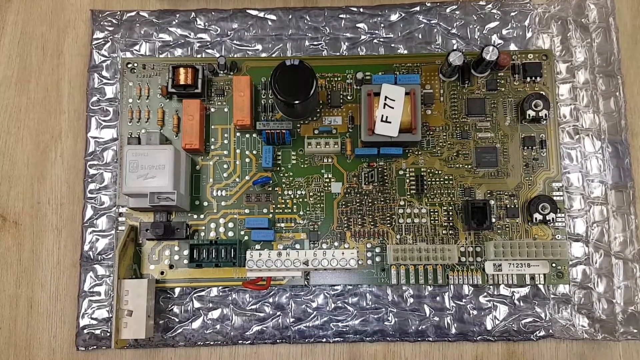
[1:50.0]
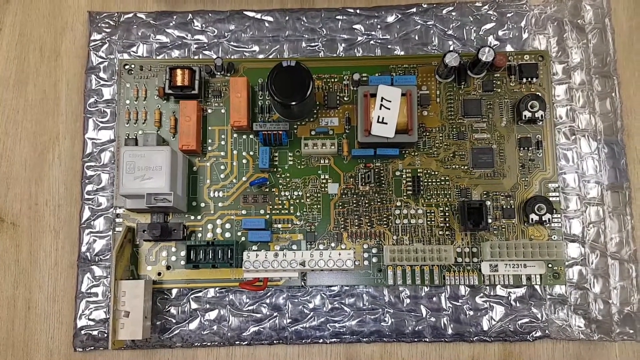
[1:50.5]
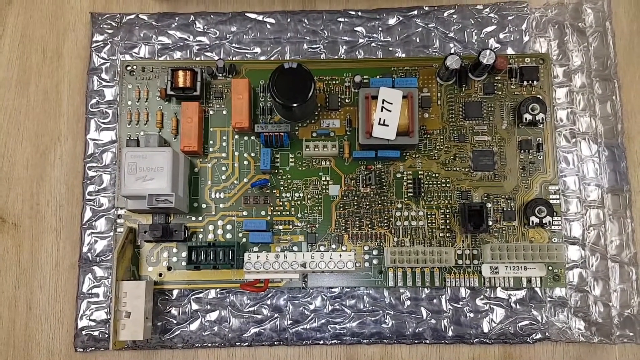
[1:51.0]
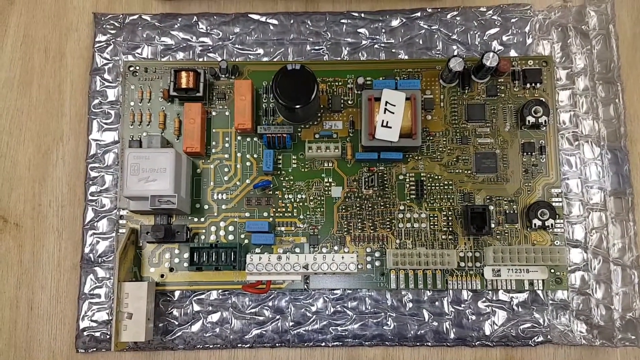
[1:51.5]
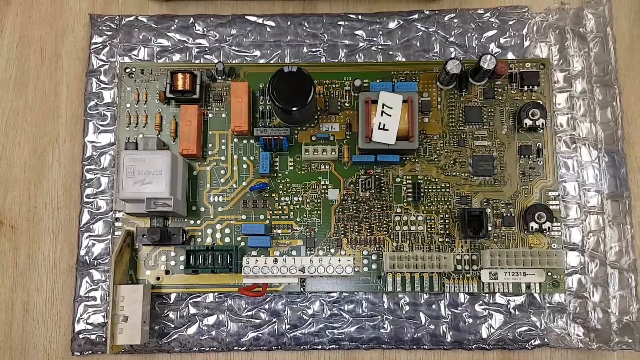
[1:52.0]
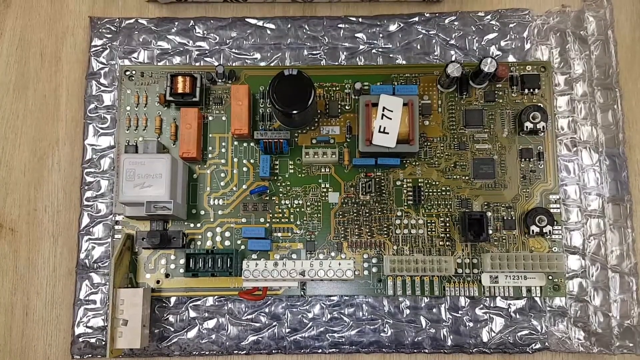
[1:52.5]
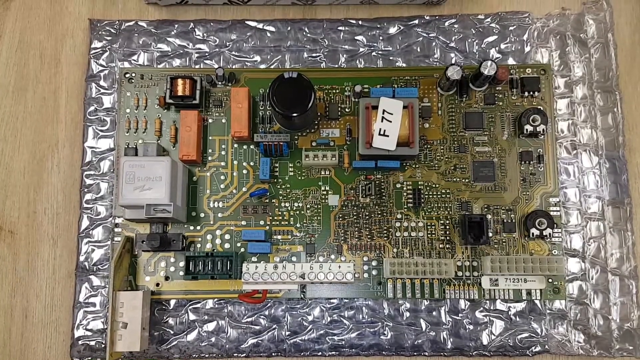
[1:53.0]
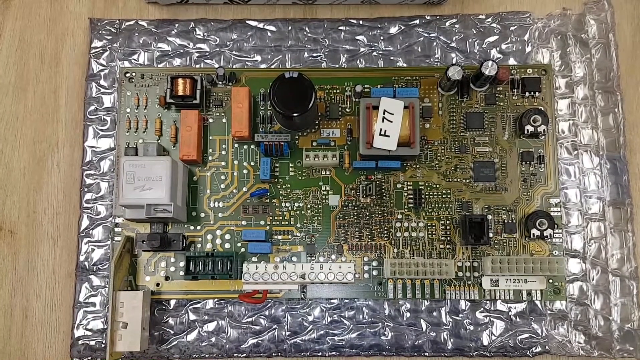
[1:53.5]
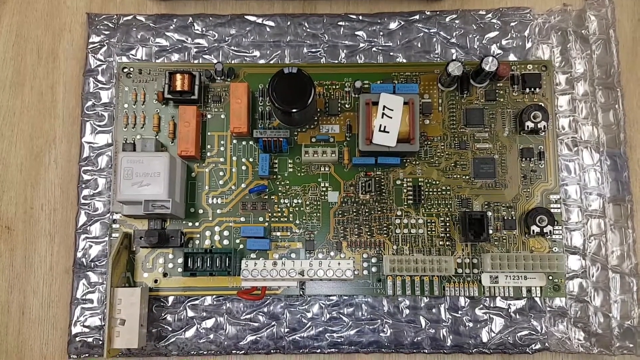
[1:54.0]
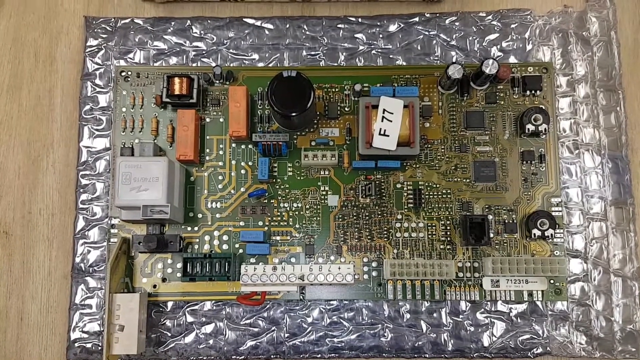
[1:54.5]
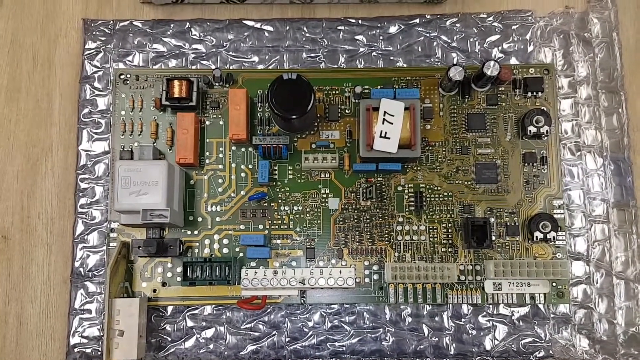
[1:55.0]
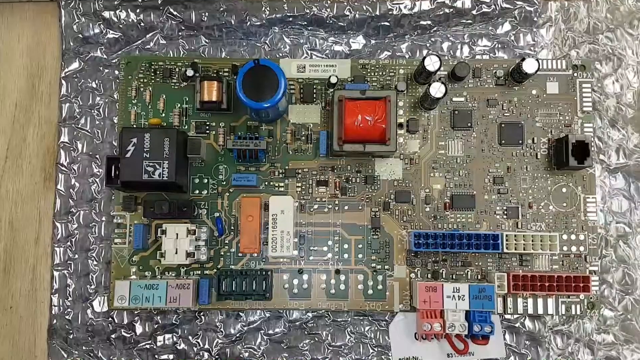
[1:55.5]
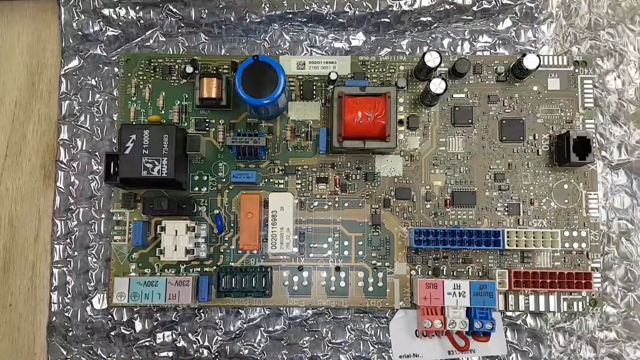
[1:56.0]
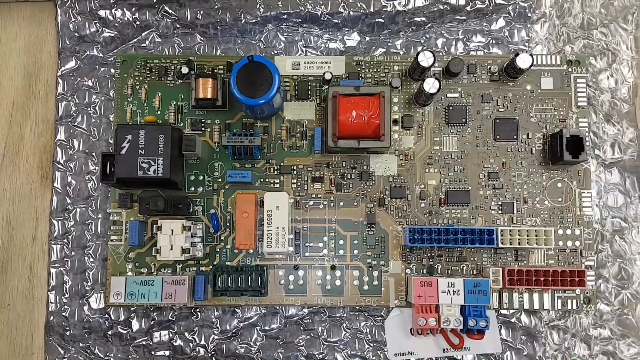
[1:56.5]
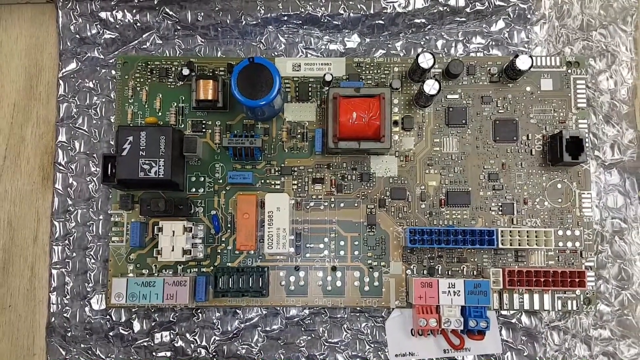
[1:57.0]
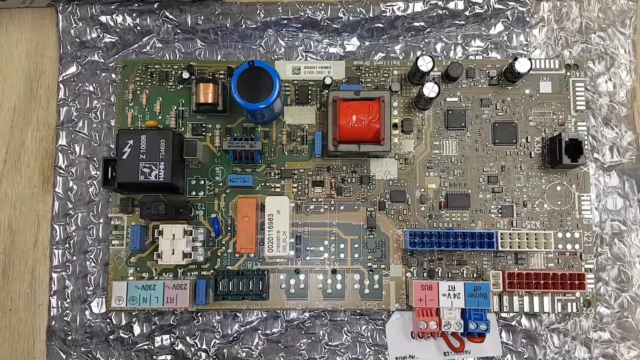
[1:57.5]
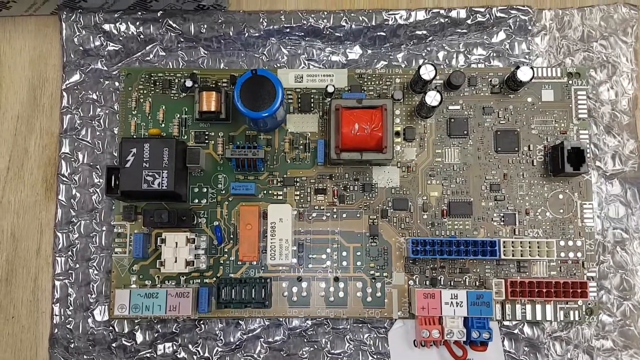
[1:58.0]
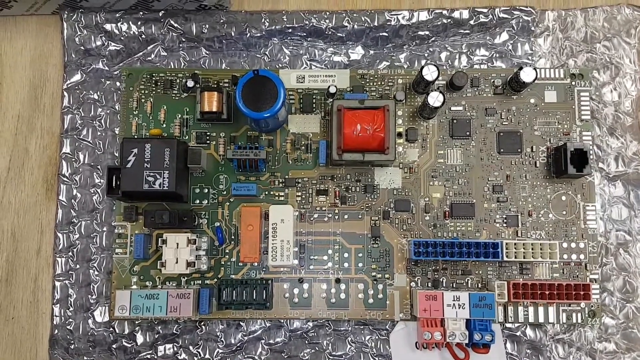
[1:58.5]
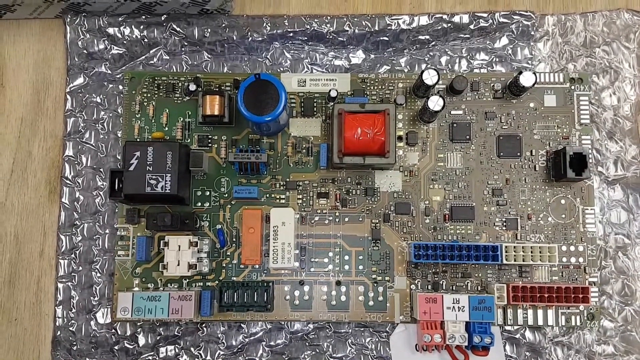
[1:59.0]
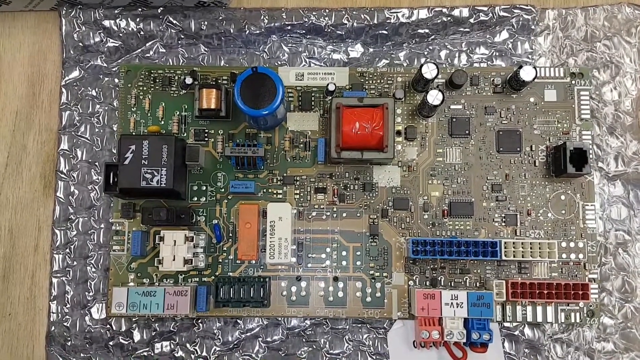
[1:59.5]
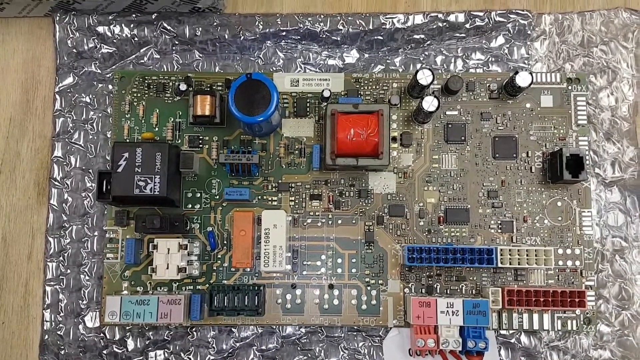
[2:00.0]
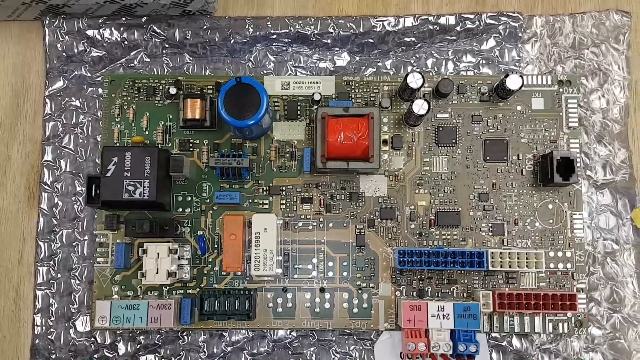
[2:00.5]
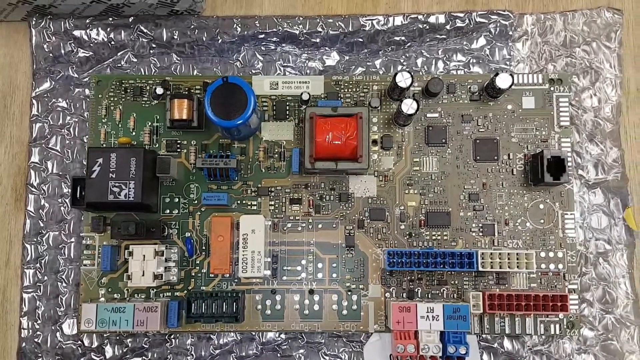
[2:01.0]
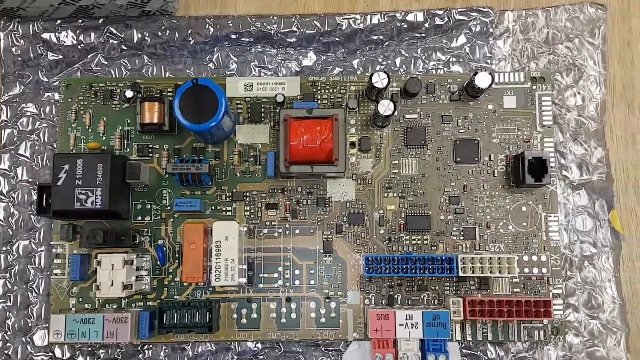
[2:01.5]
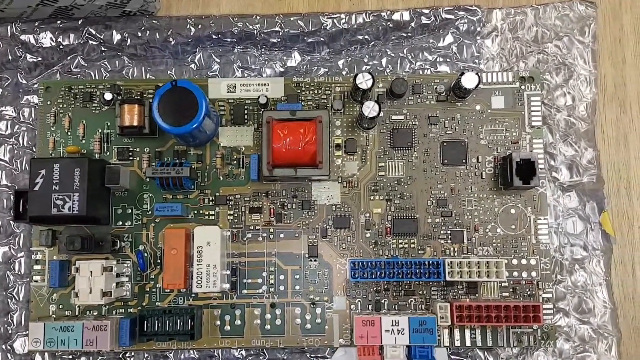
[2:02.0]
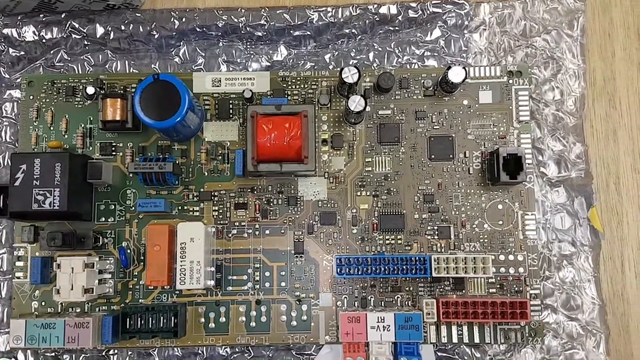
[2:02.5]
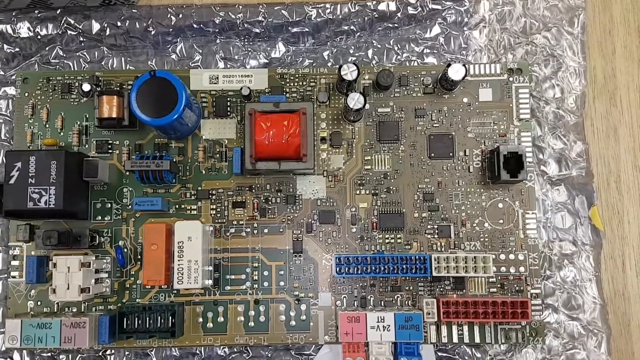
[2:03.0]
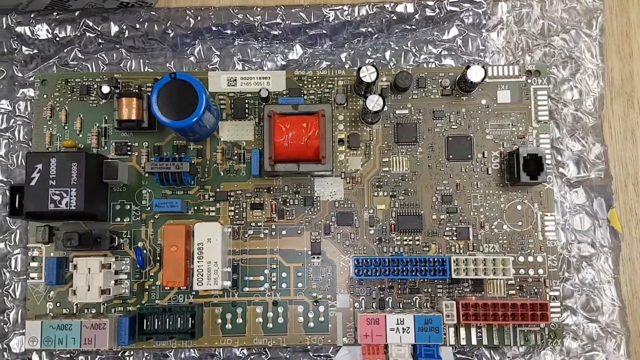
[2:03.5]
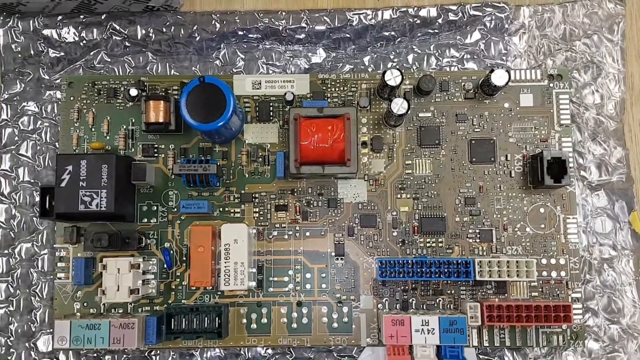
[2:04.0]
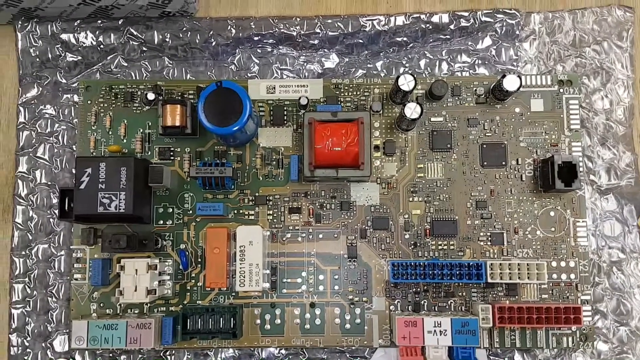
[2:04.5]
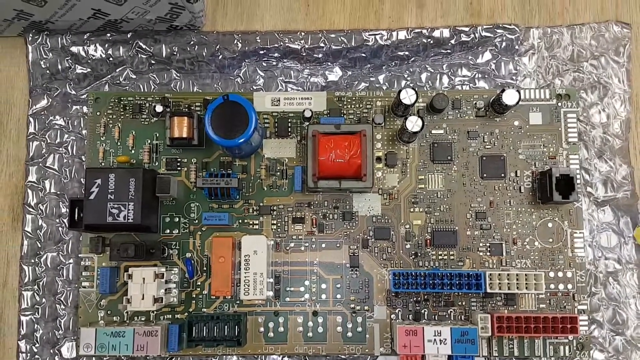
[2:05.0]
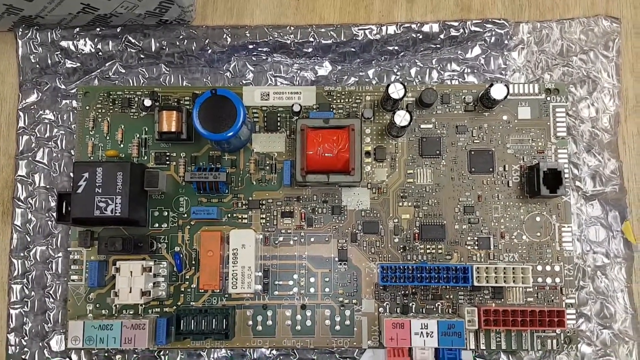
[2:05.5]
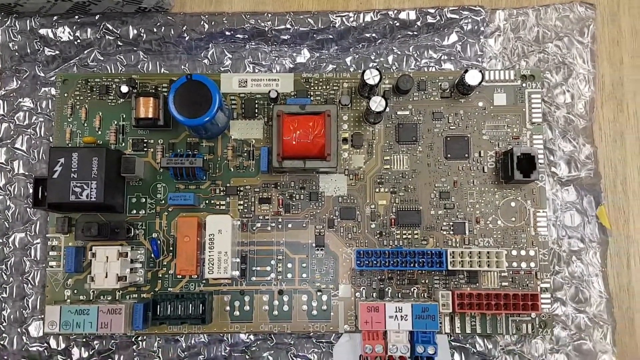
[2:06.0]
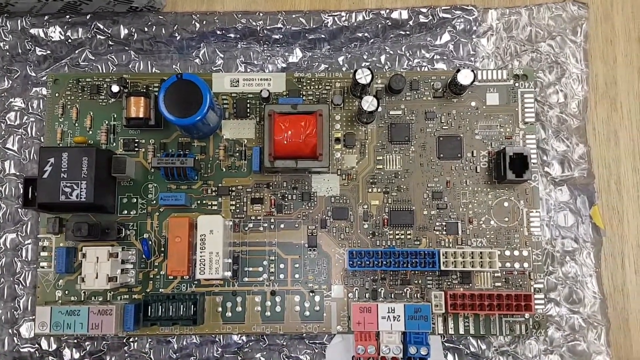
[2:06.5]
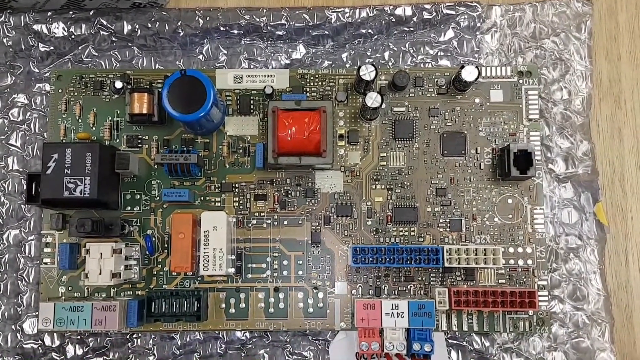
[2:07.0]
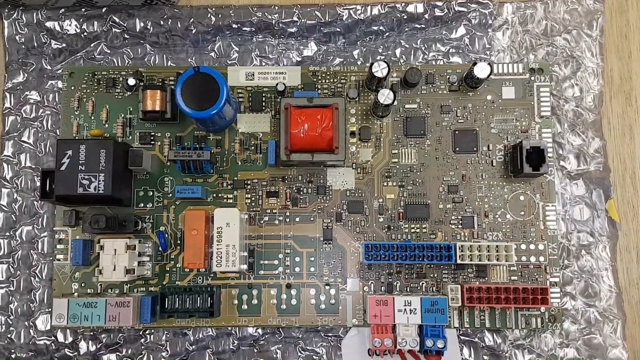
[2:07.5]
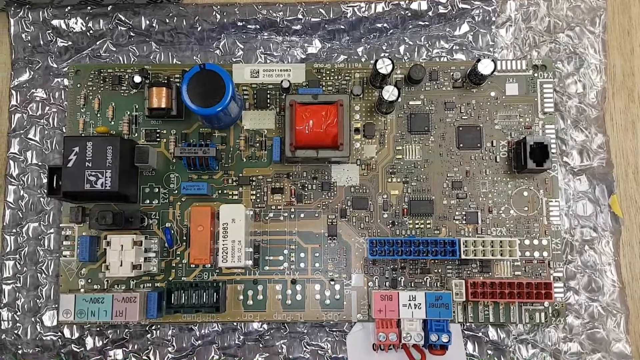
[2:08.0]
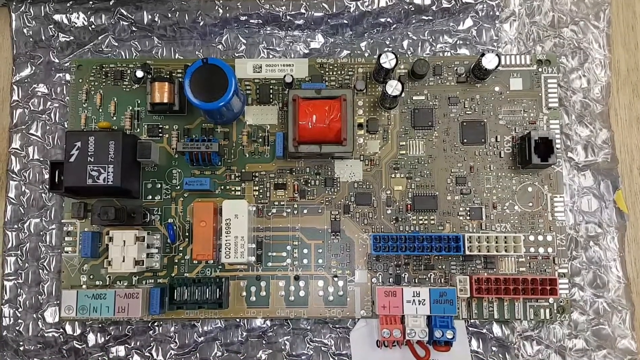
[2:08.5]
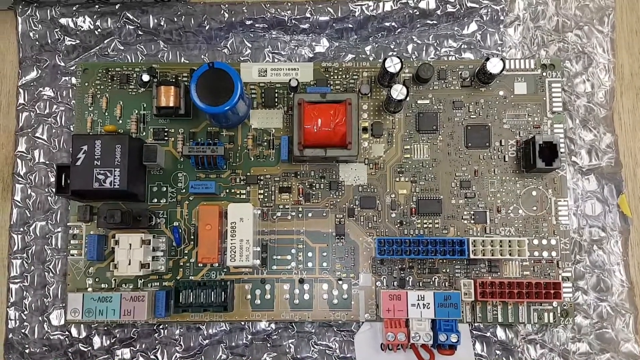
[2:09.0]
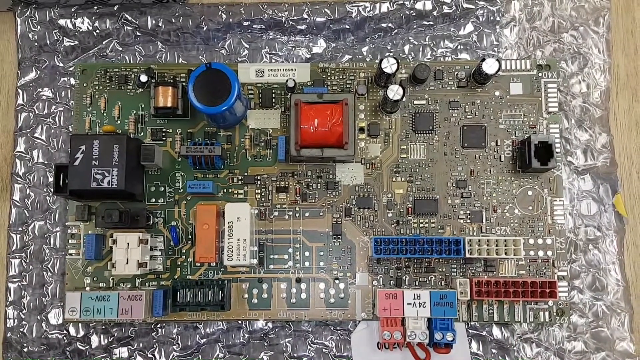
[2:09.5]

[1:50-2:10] The circuit board is shown and examined, and then what is perhaps another circuit board appears; it looks like it has different parts and seems to be a different board altogether. It still looks like a city with factories, traffic and parking lots.